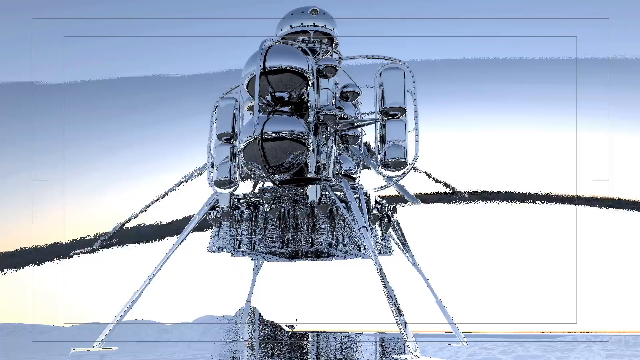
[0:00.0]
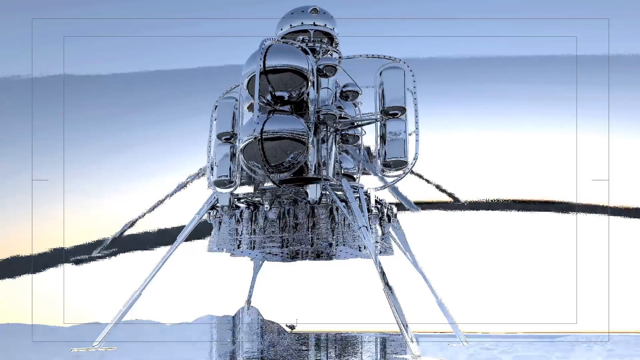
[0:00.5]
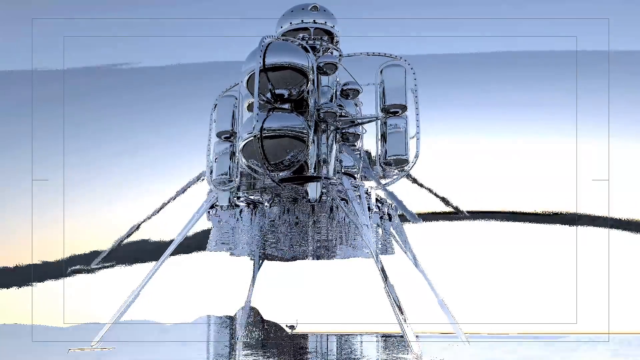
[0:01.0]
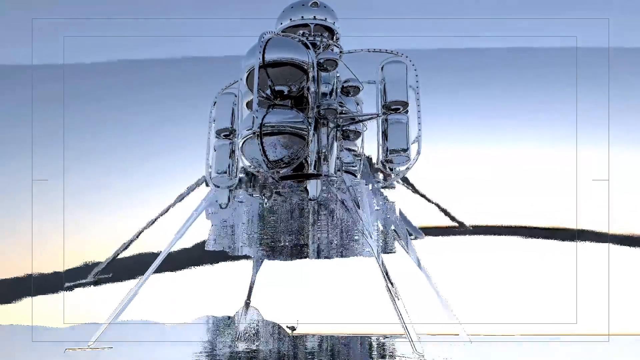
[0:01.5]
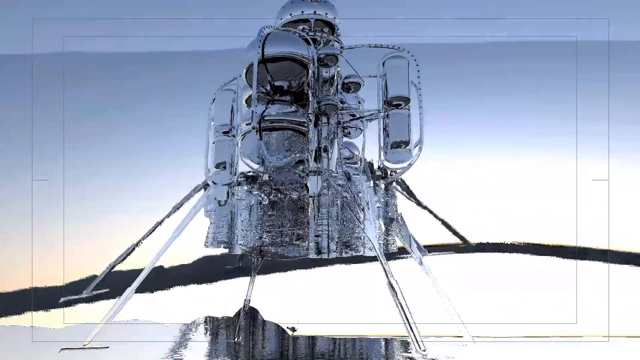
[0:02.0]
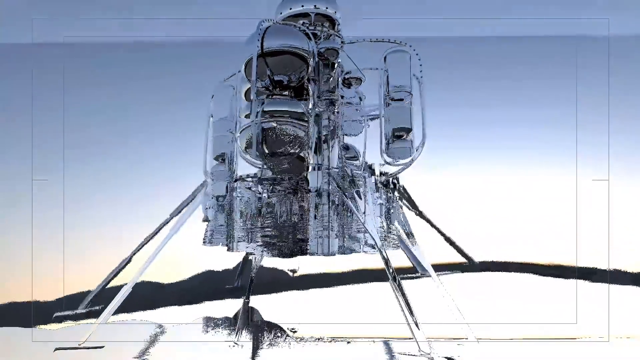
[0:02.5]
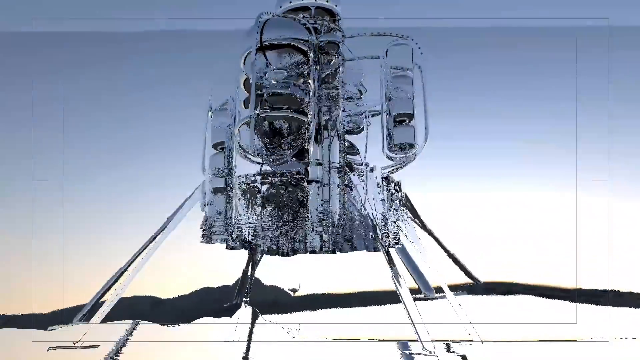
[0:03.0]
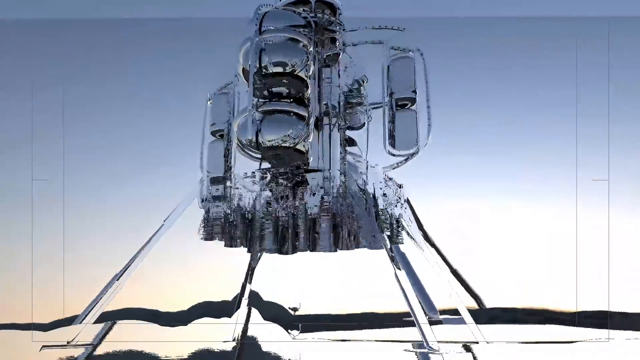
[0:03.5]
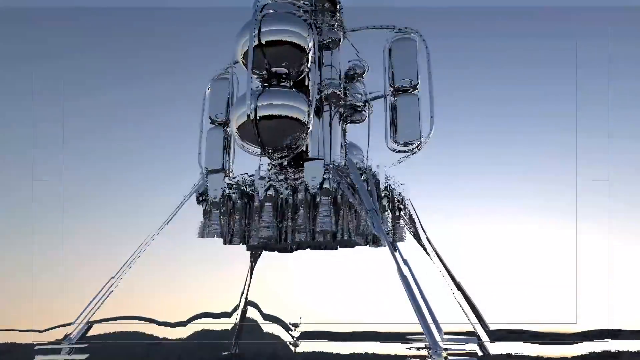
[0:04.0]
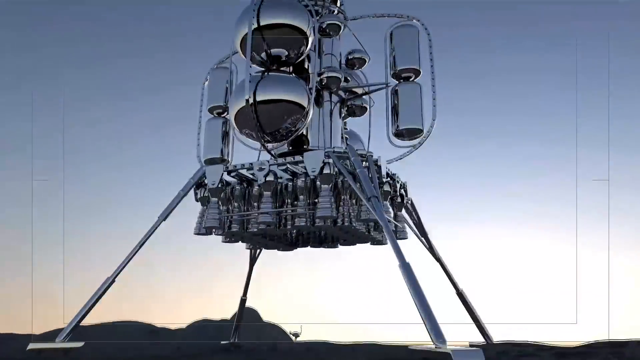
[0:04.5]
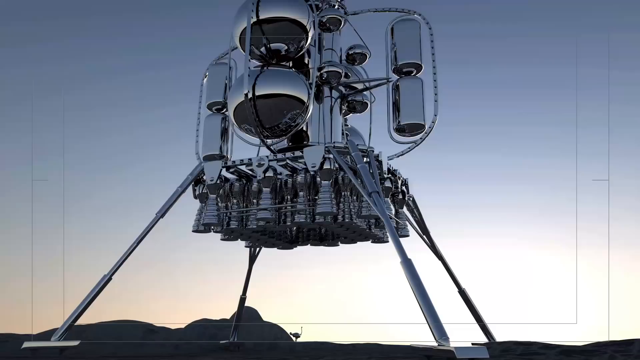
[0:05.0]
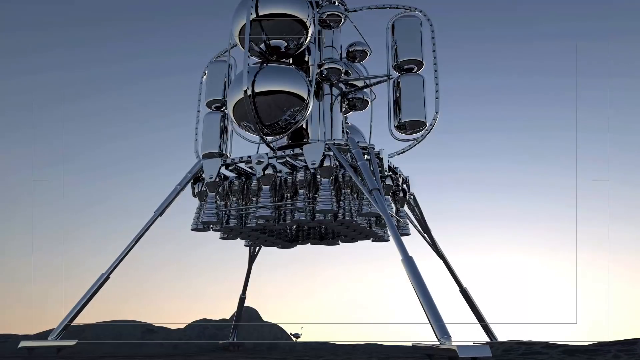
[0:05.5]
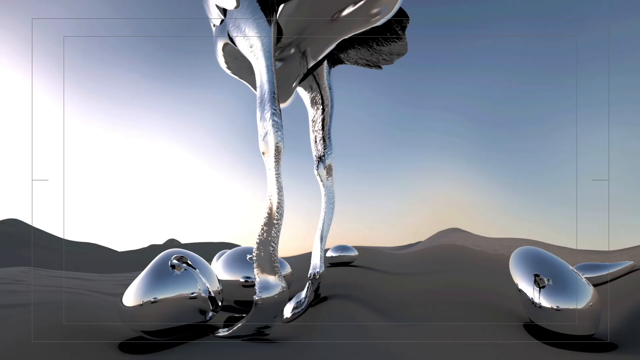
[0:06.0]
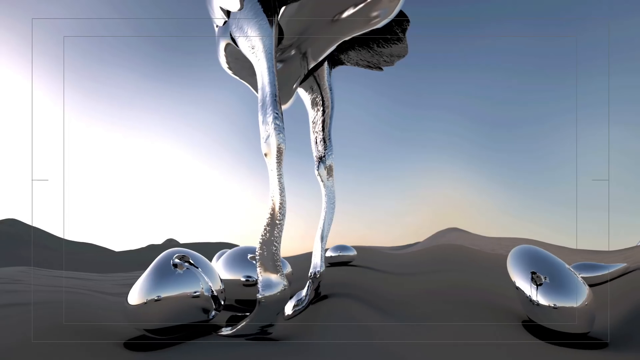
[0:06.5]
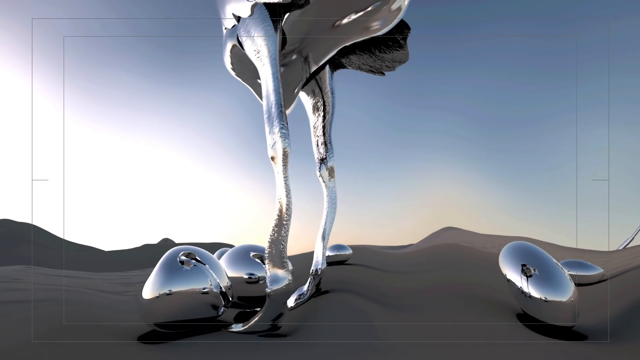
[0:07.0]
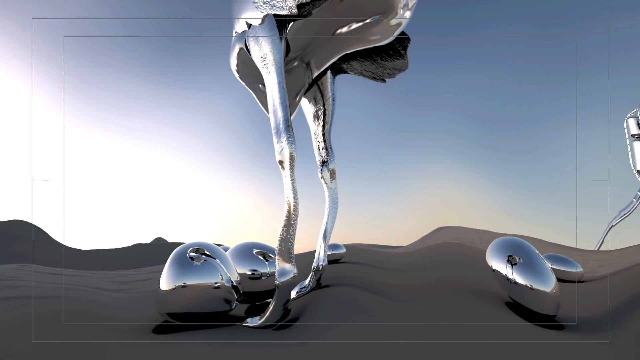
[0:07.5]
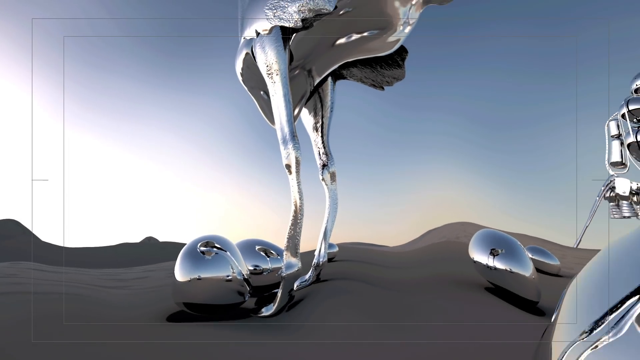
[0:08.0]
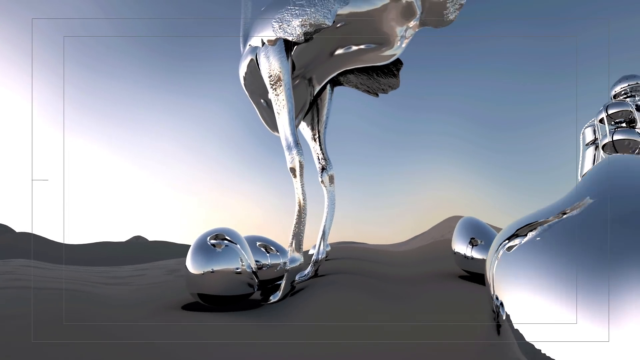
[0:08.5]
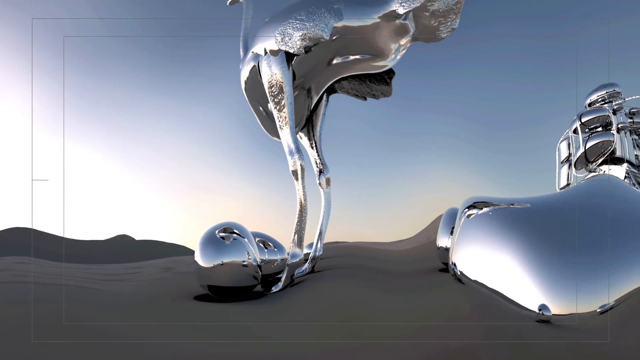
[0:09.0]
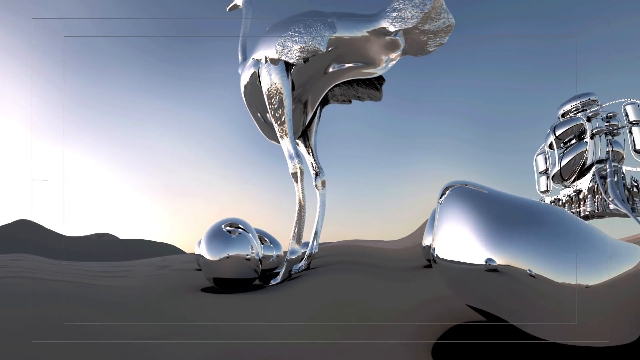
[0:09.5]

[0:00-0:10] An object that looks like a moon rover appears. It has a lot of thrusters on it, along with round and rectangular things. It has four legs and is made of metal. On top of it there is a half moon with holes in it, plus a light or a camera, and there seem to be some lights on the object. The object moves kind of toward the viewer and becomes blurry. The view then opens onto a page showing what looks like a giant duck that still has eggshells on it, and then the shot abruptly stops.